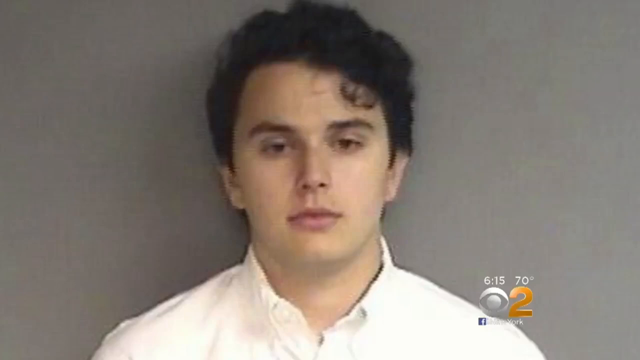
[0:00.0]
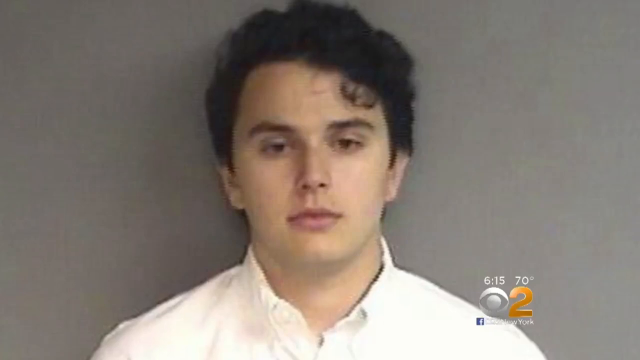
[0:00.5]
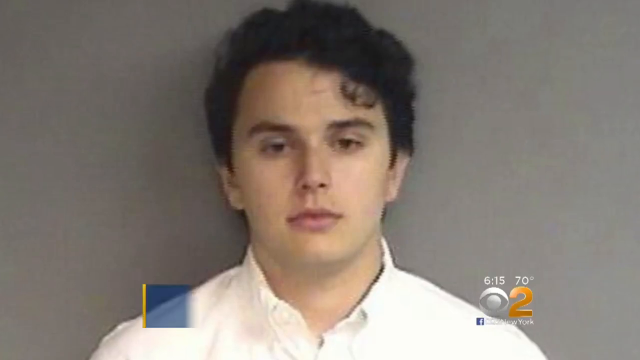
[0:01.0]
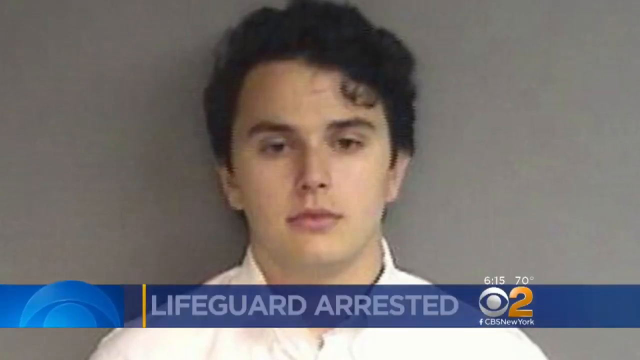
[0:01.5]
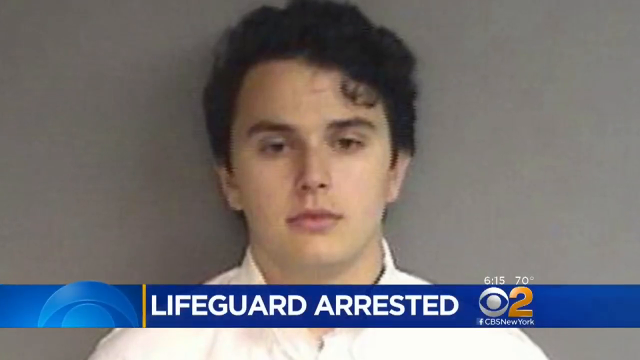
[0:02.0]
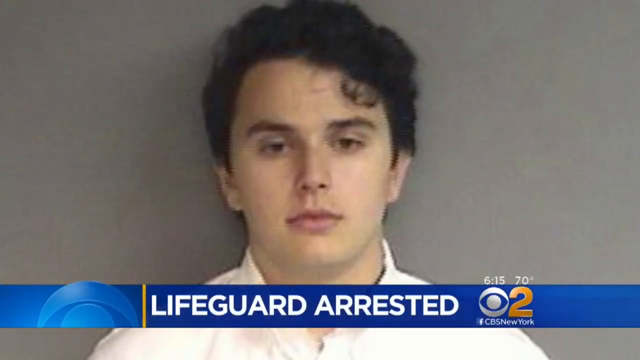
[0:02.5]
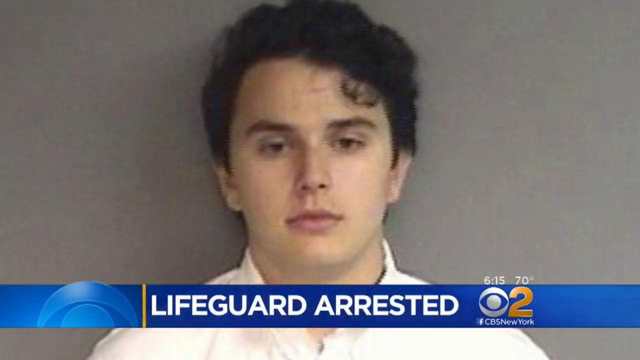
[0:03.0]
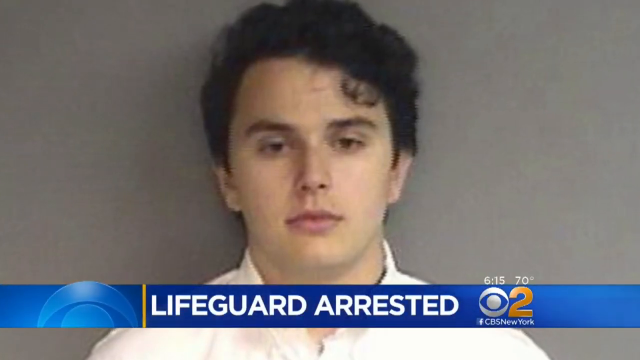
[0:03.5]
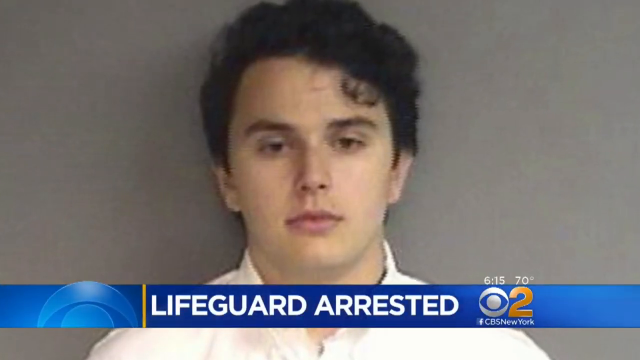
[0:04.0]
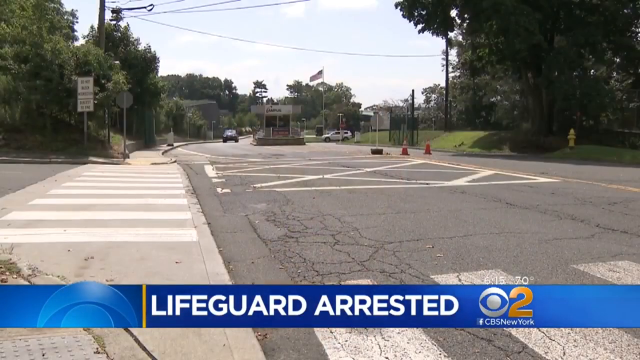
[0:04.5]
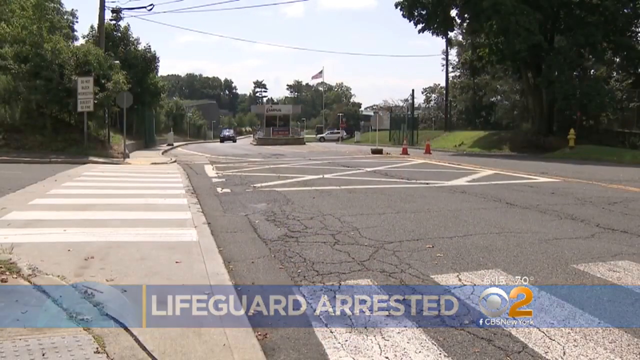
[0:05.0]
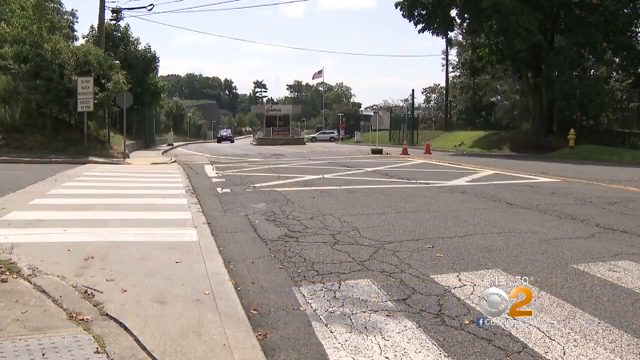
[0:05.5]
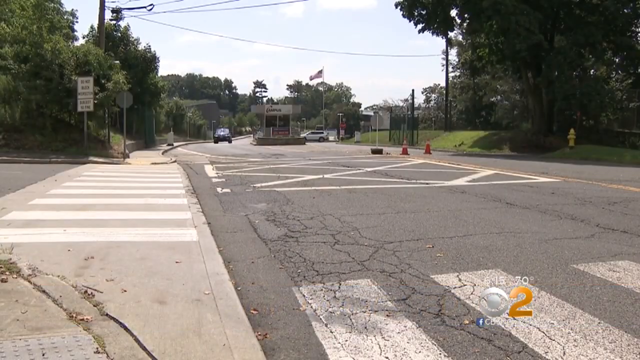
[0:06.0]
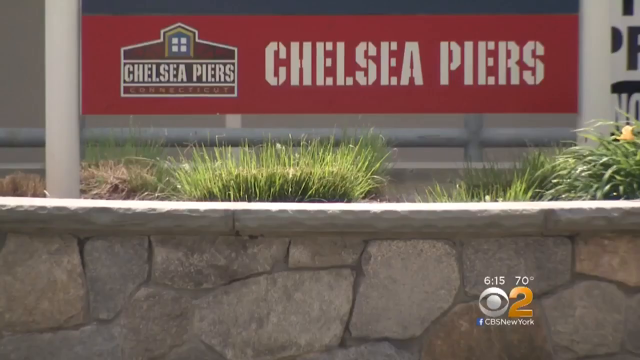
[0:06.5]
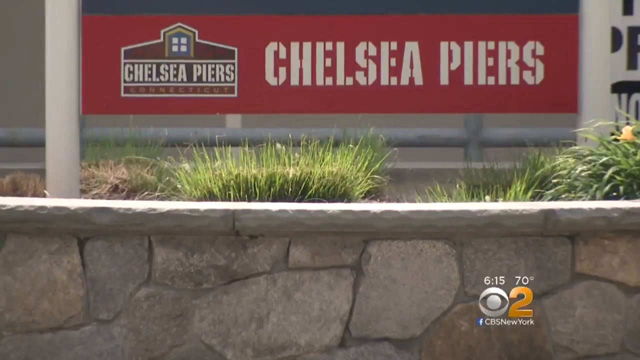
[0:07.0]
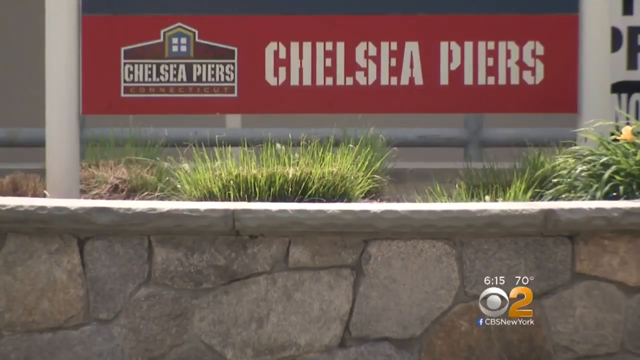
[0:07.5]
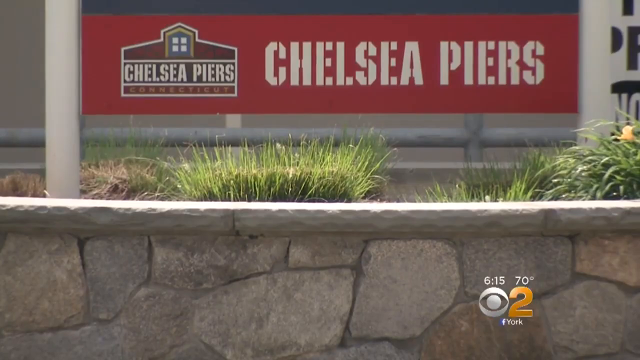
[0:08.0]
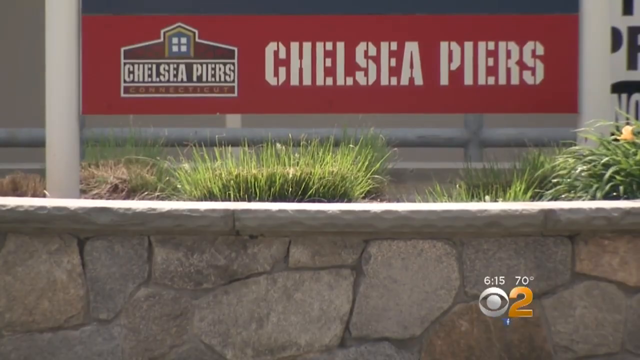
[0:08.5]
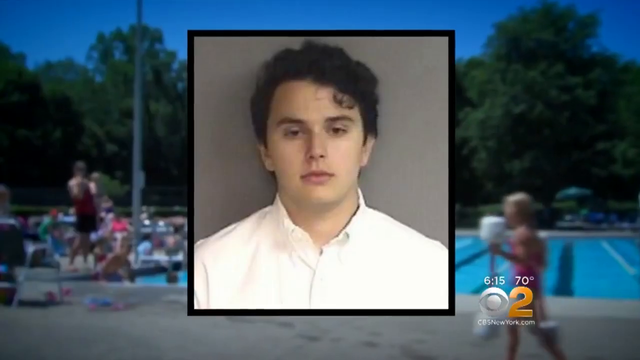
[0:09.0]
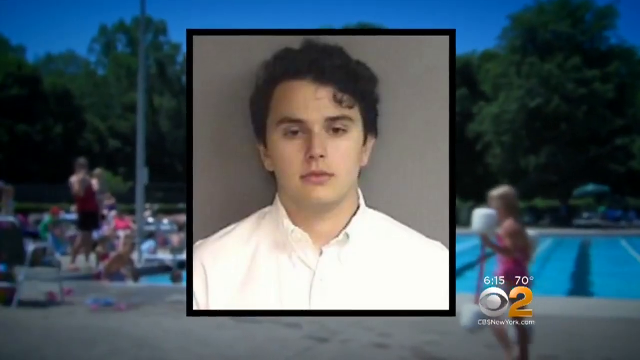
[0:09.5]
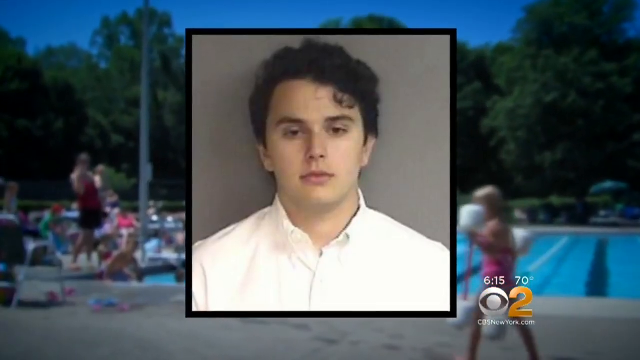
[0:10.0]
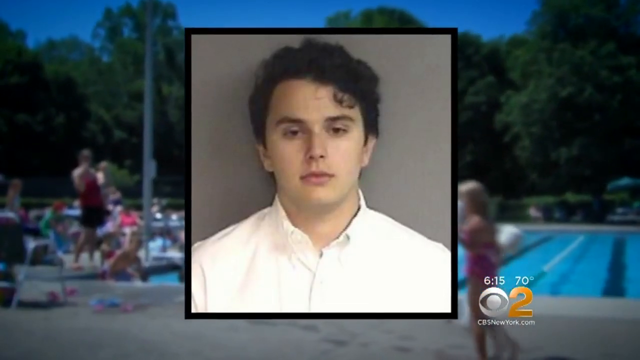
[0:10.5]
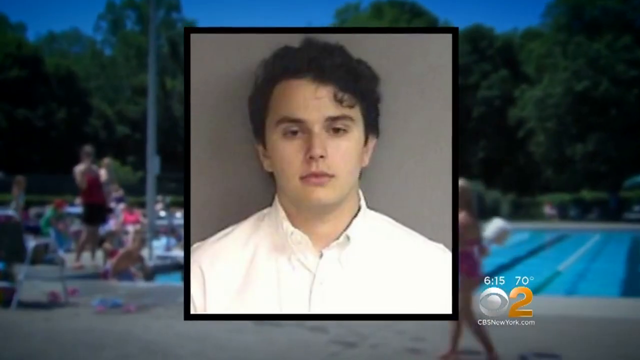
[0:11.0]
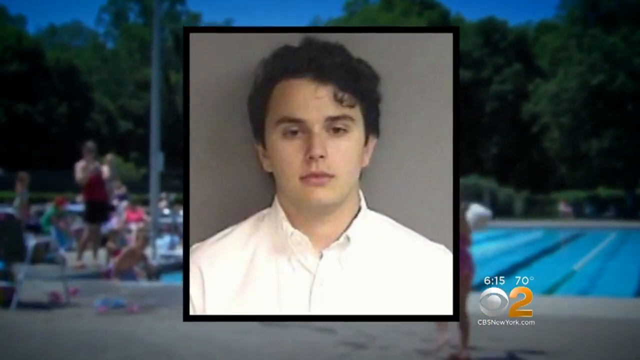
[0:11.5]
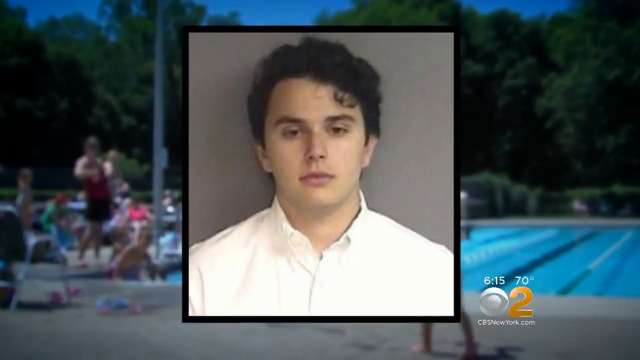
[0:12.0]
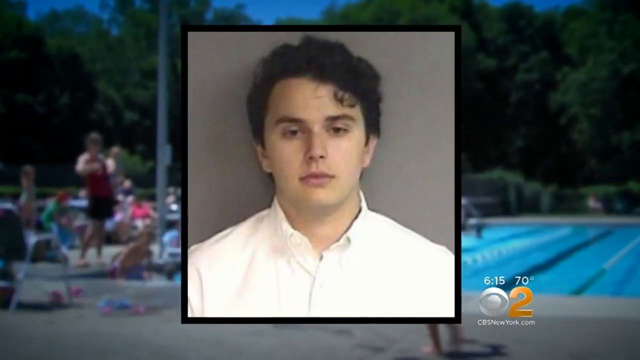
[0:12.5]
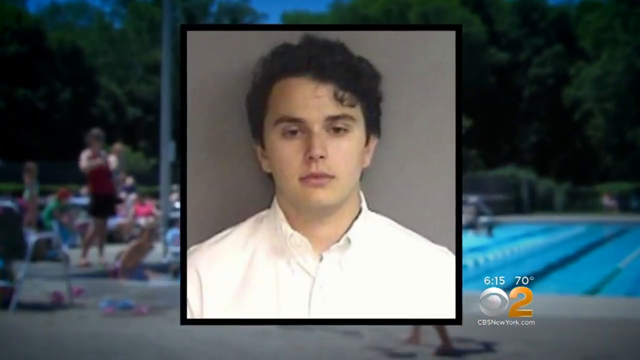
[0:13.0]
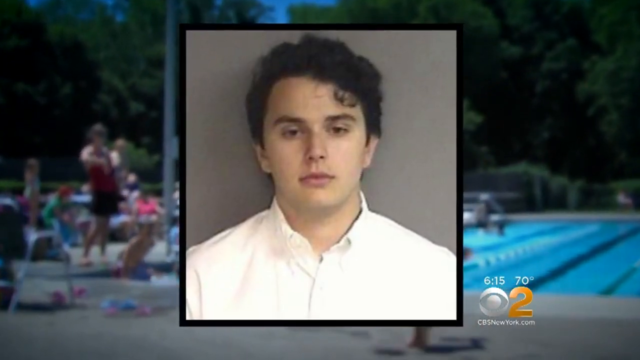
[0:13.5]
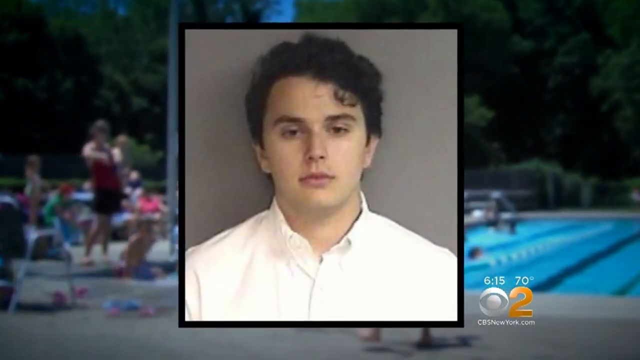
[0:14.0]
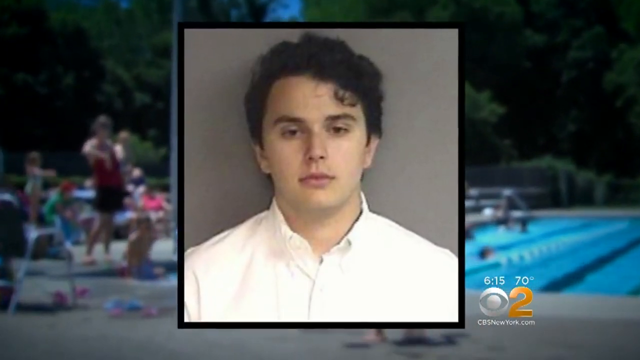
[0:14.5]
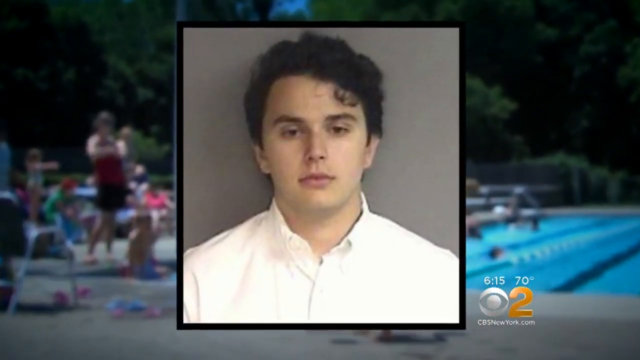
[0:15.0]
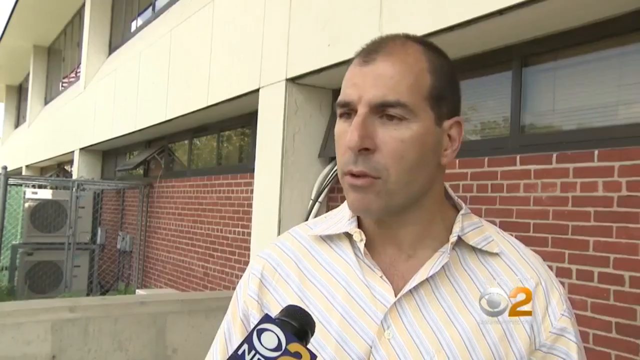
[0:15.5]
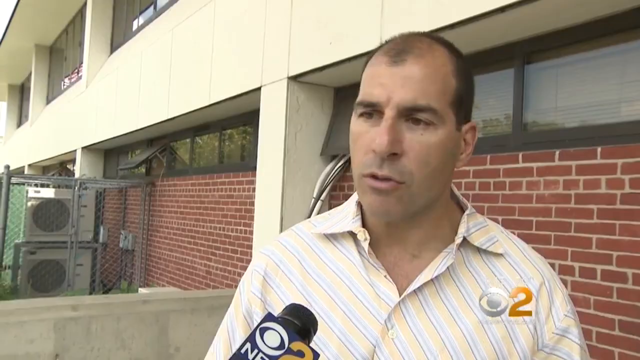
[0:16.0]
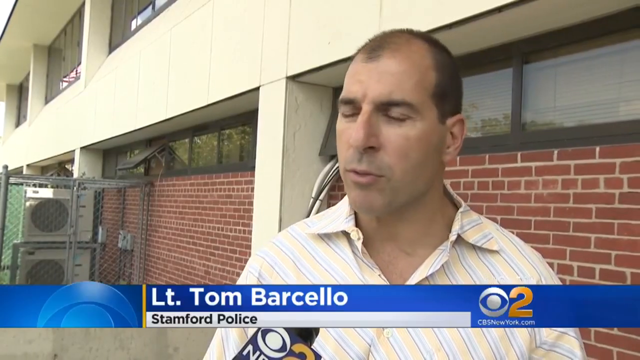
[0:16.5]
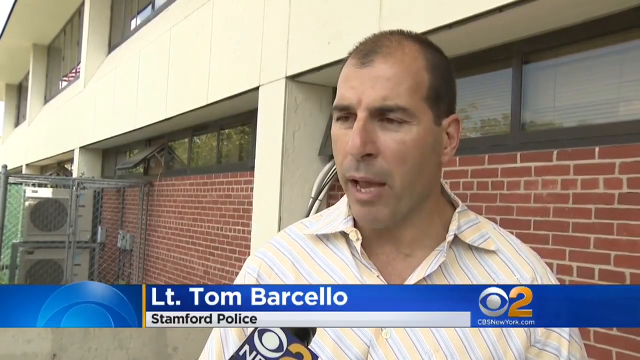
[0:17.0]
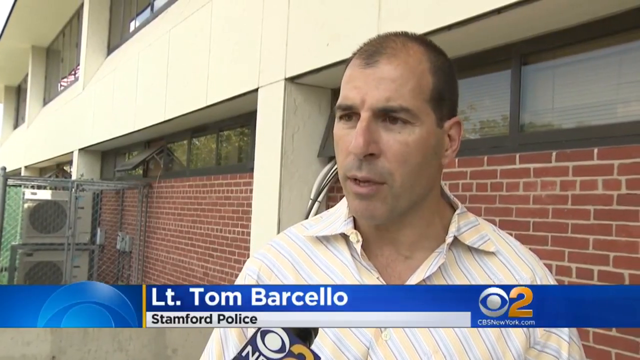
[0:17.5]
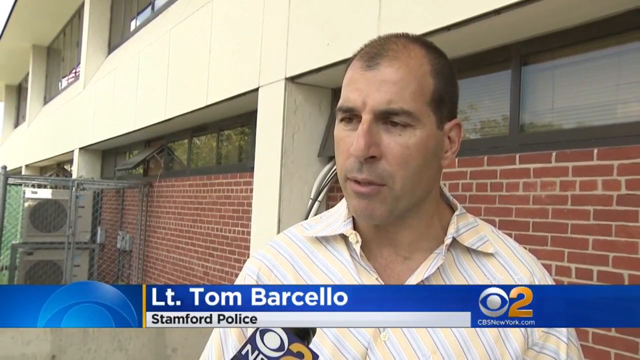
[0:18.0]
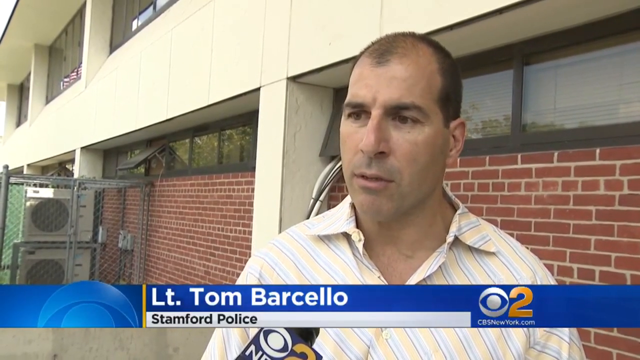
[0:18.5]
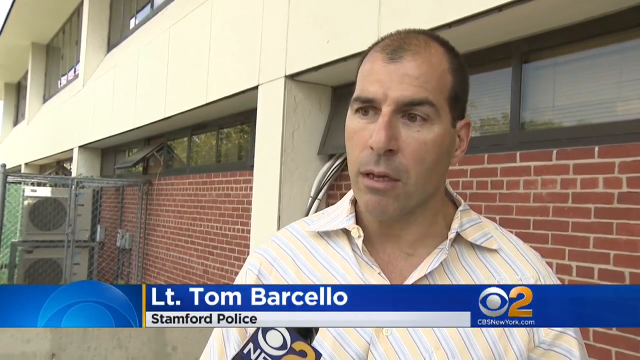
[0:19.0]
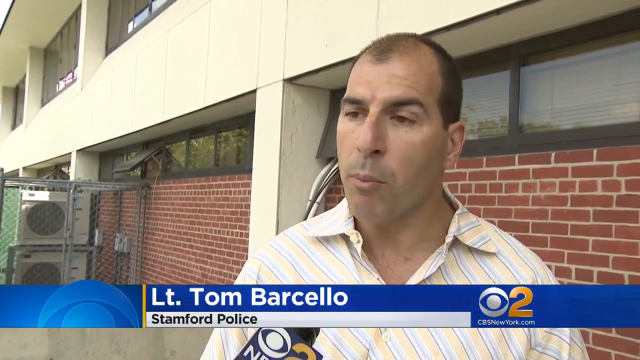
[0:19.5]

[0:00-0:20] A news story about a young man who was arrested and who apparently was a lifeguard in a different city. It first shows his mugshot; he looks young. It cuts away to B-roll of a street, where the event happened at Chelsea Piers, then to B-roll of a crowd of people at a pool. Lieutenant Tom Barcello of Stamford Police is then shown talking. The story cuts to footage of the young man in court and shows court documents, with text stating that the lifeguard in Connecticut pleads not guilty in a child near-drowning case. In court he wears a black suit with a gray shirt and a gray striped tie, and his lawyer wears a gray suit with a plaid shirt and tie. B-roll of kids playing in the pool follows. The story returns to the teleprompter woman, who wears a pink top and a floral black and red skirt, with the image of the kids at the pool on the big screen behind the broadcast.